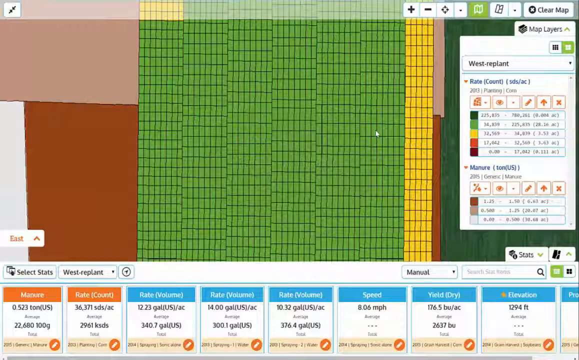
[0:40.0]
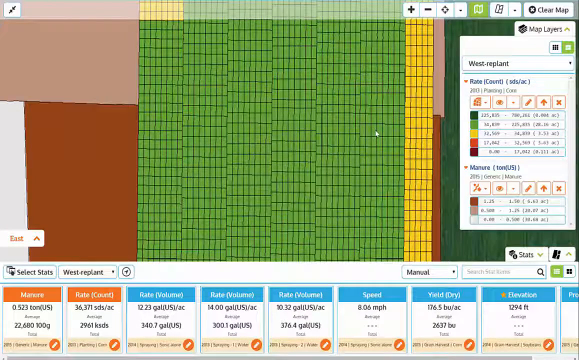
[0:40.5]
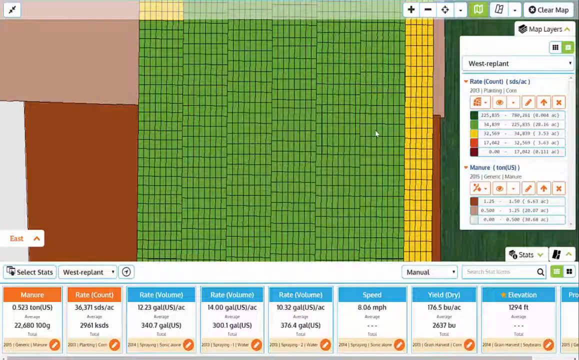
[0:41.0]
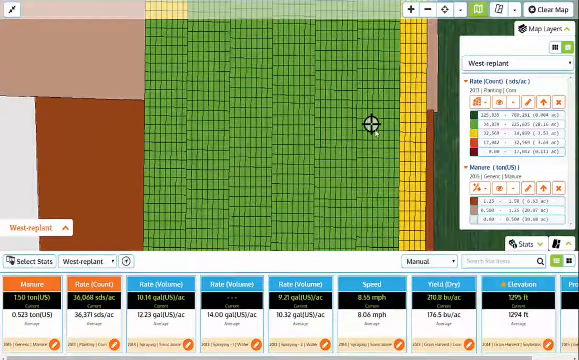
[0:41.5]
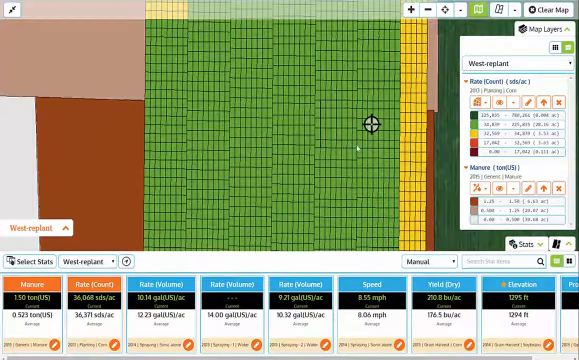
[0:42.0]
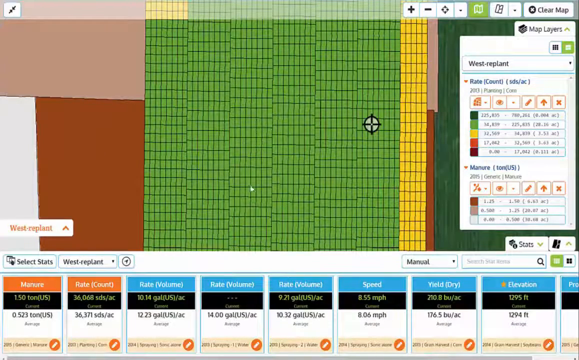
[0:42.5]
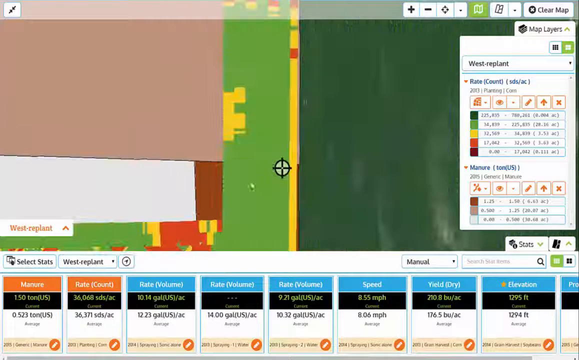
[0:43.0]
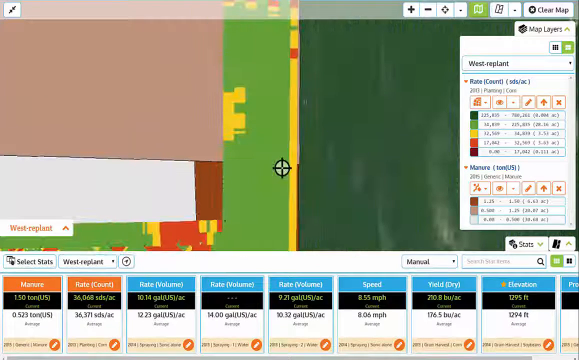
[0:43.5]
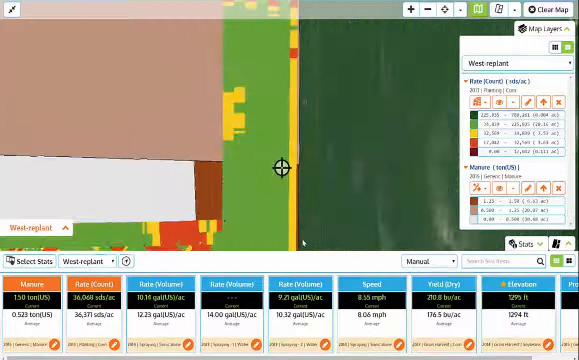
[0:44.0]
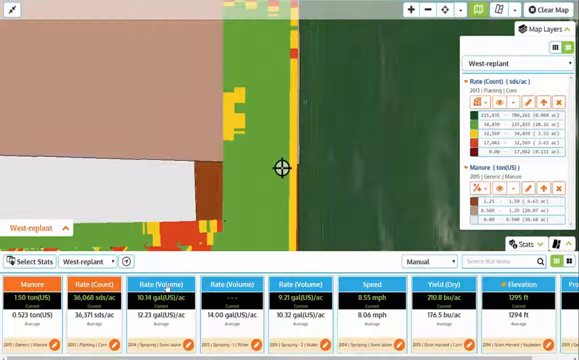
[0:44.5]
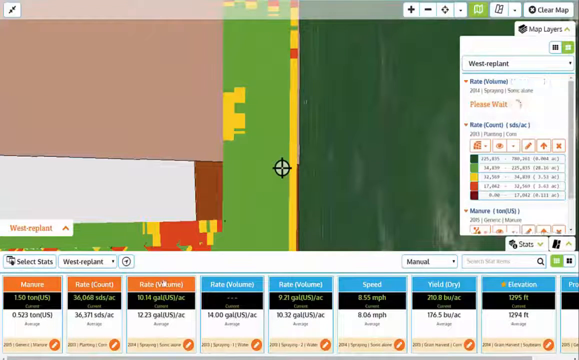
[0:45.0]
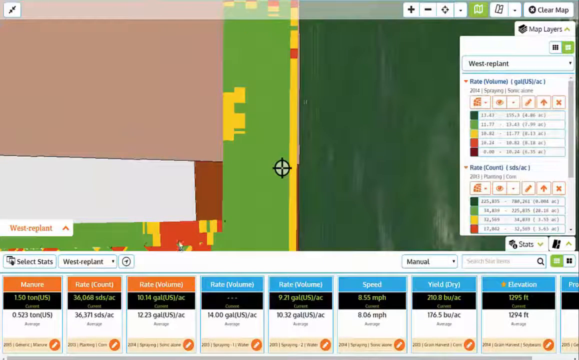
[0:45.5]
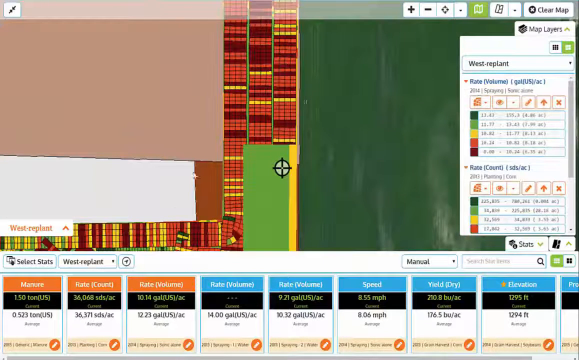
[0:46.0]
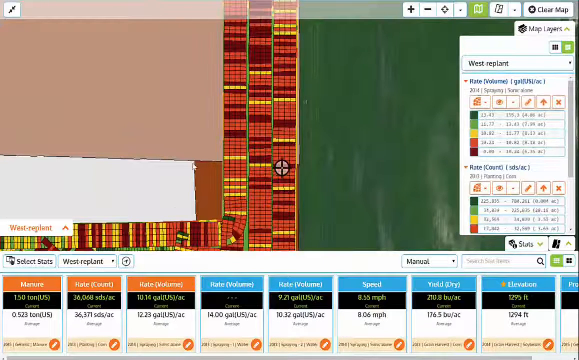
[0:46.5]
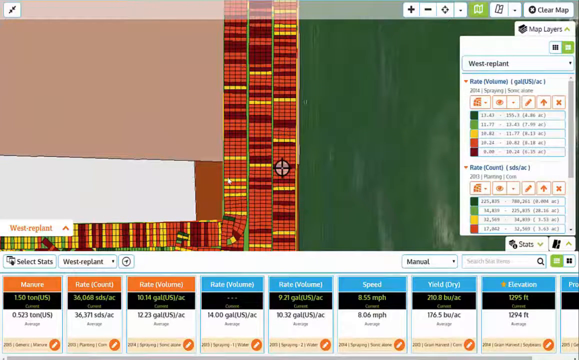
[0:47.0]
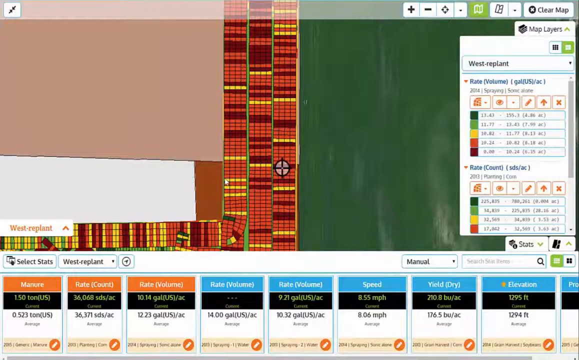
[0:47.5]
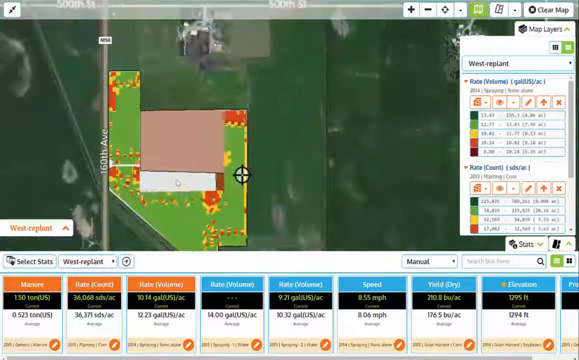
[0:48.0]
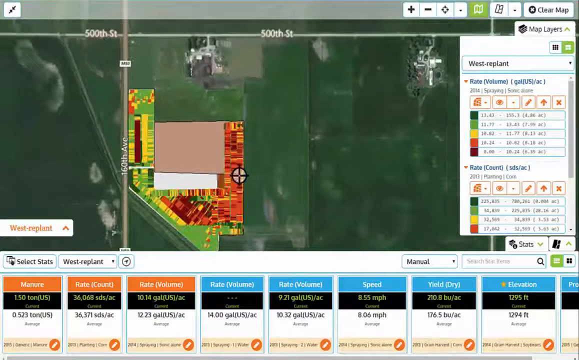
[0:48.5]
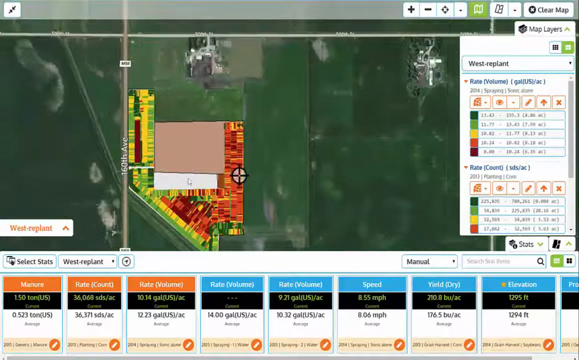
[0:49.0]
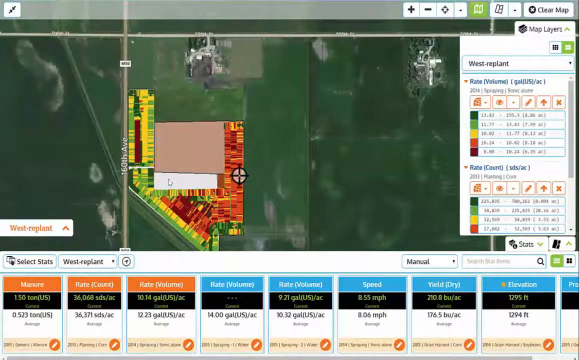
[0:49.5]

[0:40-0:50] The view stays zoomed in on the stand count, then quickly moves on to rate, a volume of something. When the volume is clicked, it says "gallons per acre" of spraying something, possibly bug repellent. This view also has red, yellow, and green sections, apparently indicating different amounts, but the amounts are fuzzy and hard to read. The view zooms in on the sections to look more closely at the red and orange section, then moves outward, and the screen says something like "previous year's application data", apparently showing what was done in the previous year for corn planting.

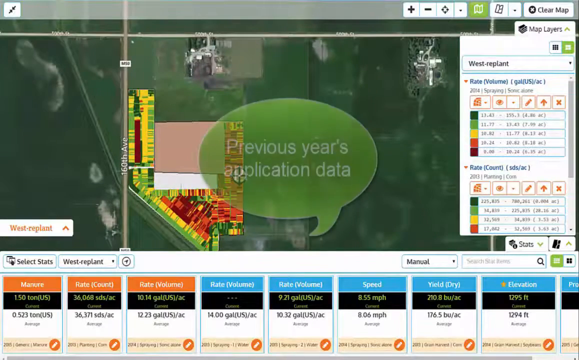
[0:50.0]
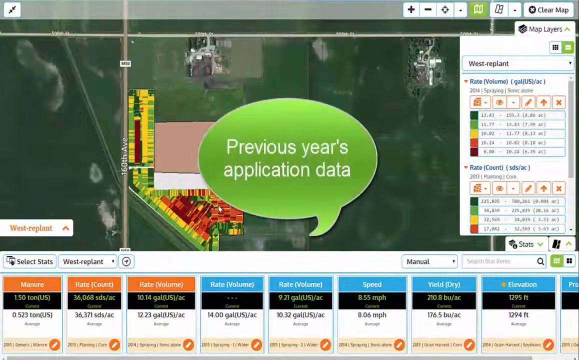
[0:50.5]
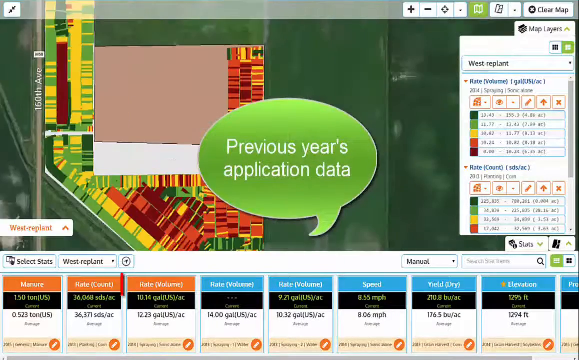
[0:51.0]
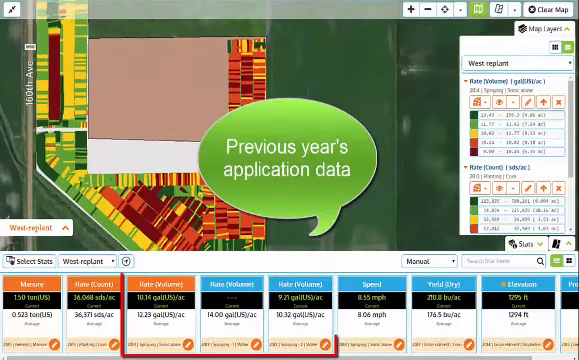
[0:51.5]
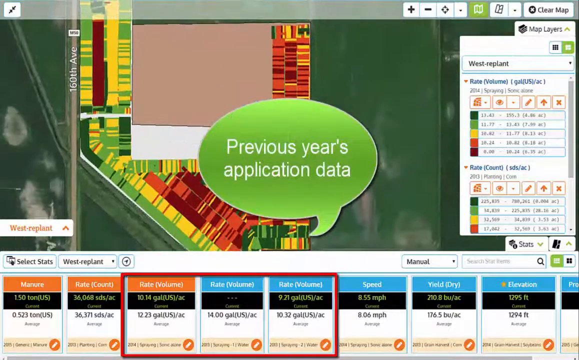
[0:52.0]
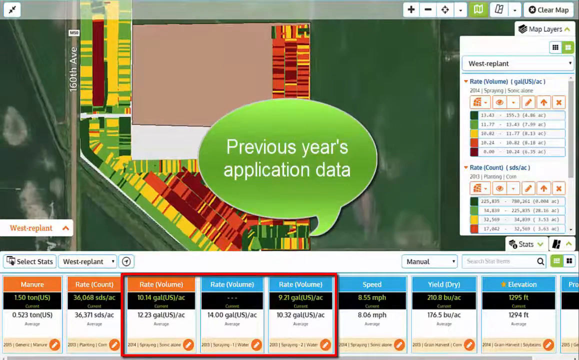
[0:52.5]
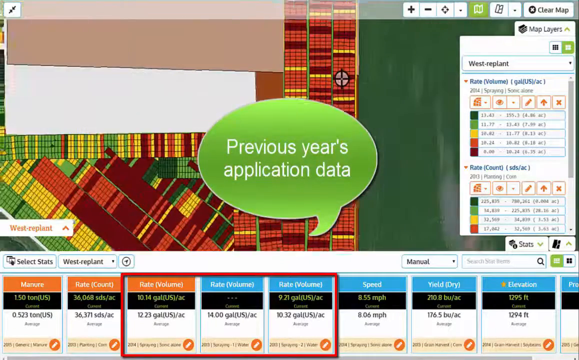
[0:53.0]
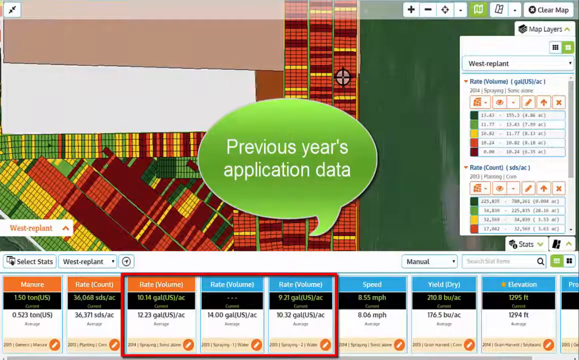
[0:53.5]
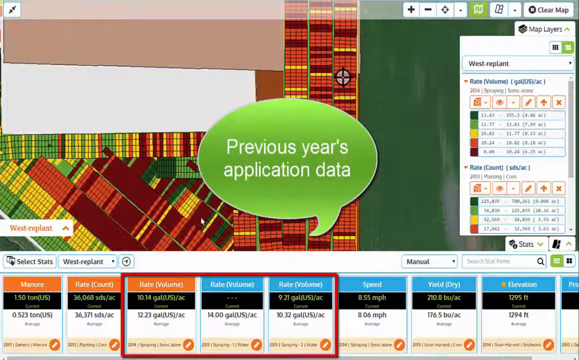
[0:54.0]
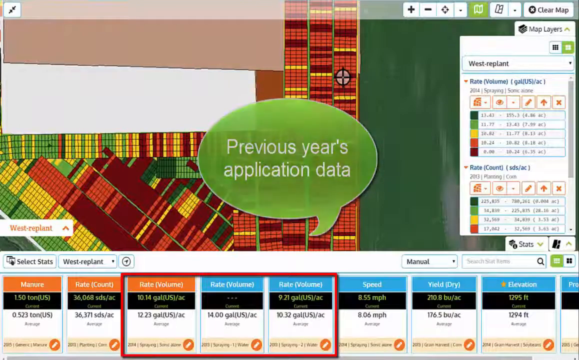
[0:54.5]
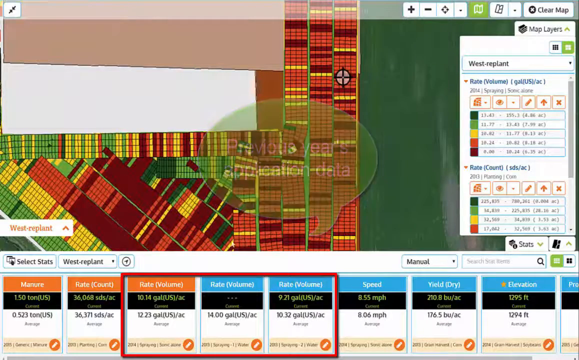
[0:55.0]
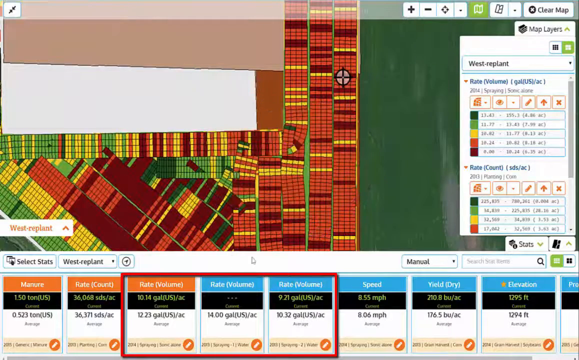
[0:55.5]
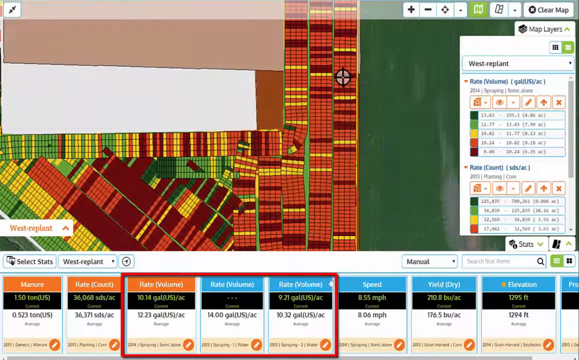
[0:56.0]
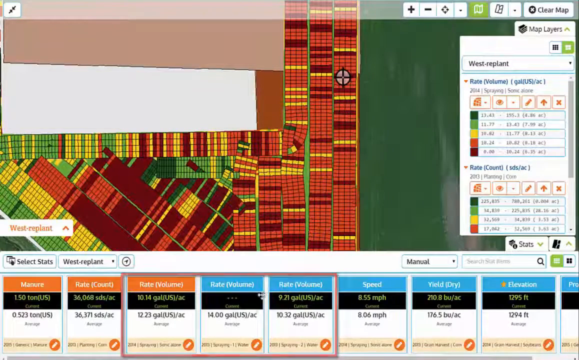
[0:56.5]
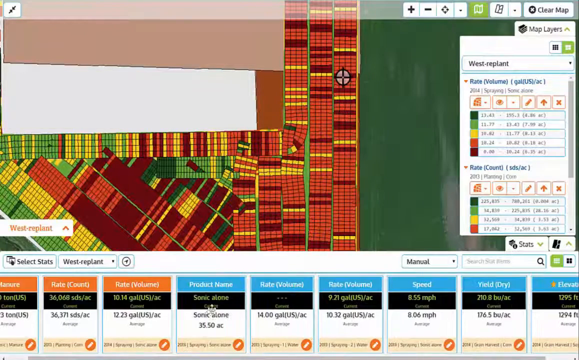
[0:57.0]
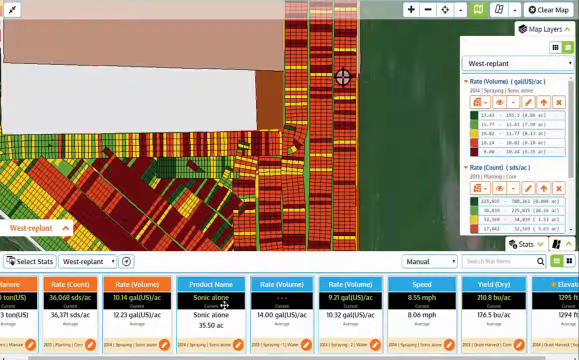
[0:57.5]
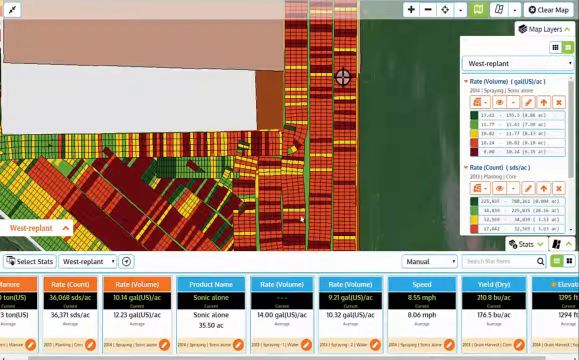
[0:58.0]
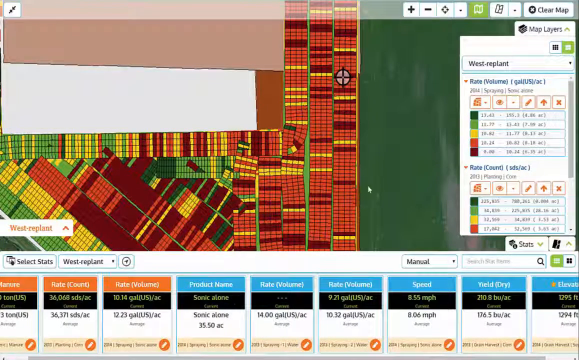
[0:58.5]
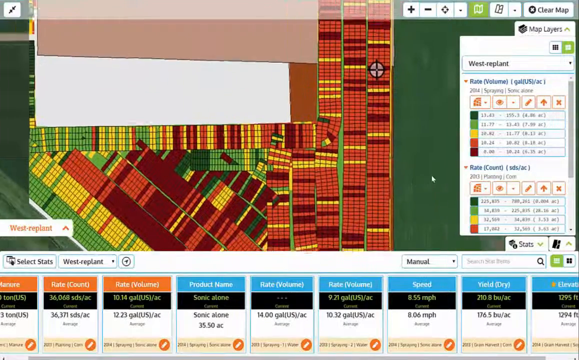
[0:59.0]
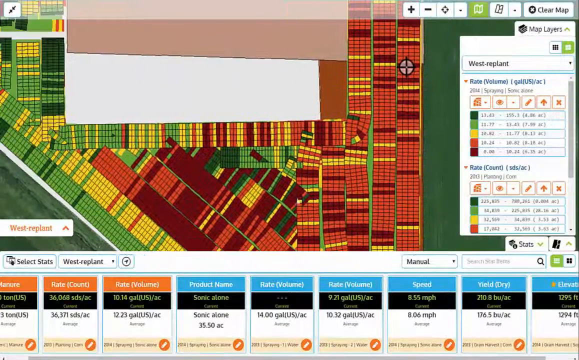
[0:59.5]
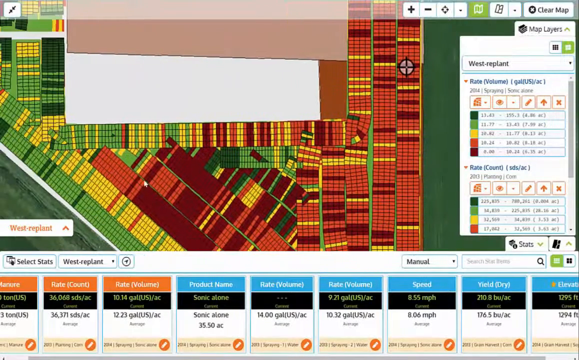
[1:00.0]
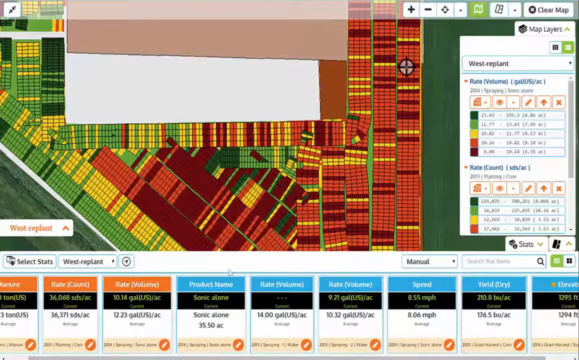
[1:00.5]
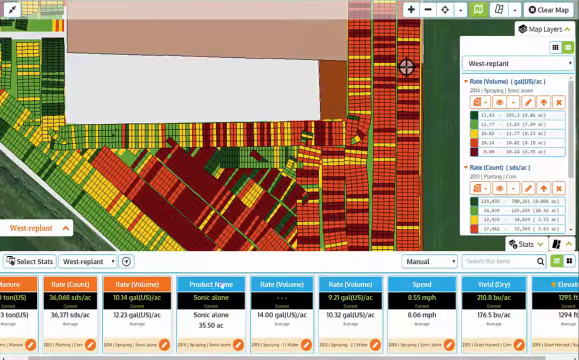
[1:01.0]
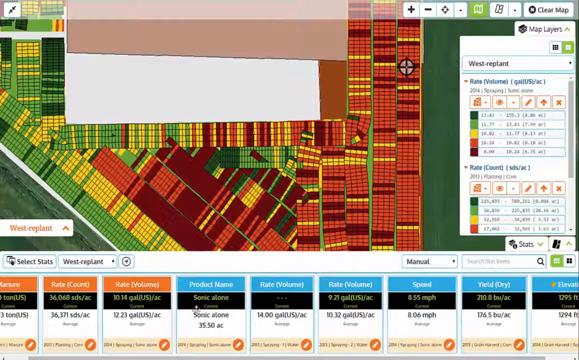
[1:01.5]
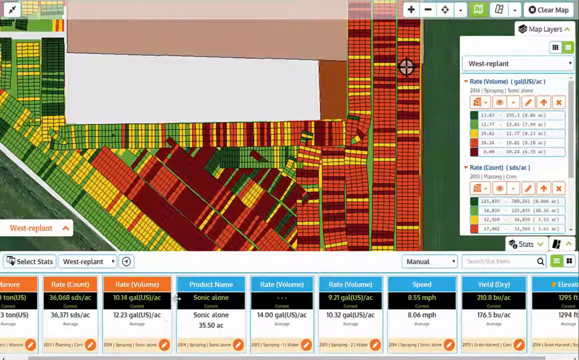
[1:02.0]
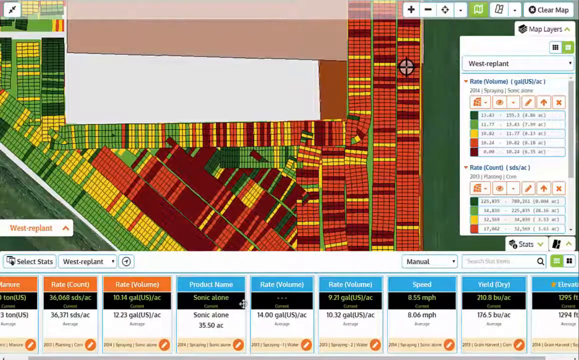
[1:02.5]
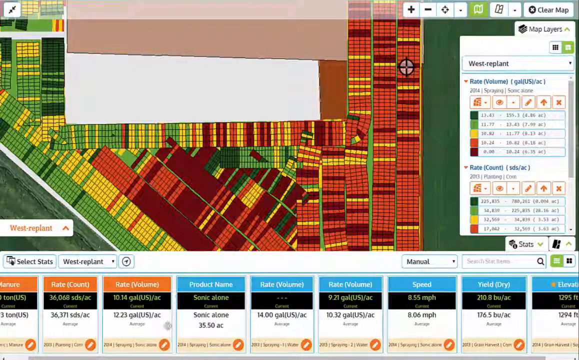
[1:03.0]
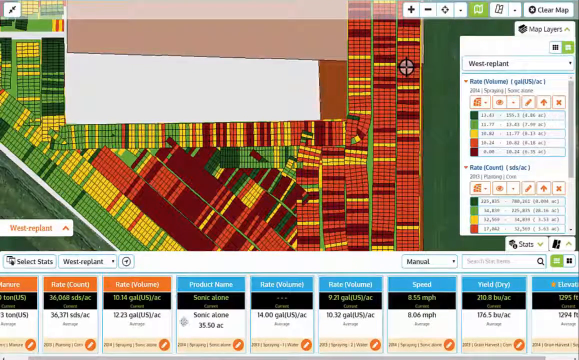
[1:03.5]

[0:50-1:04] The screen shows "previous use application data", with a red box around "rate, volume, rate, volume, and rate, volume", which seem to be rates of volumes of different things that were sprayed. The view zooms in on this section of data, apparently demonstrating that these are the volumes described in the graph. All of the little squares have different colors, showing the different volumes sprayed in each section. The same red, yellow, and green squares remain, each indicating a range of volumes for a section, showing that each section has different amounts of whatever was sprayed on the corn.